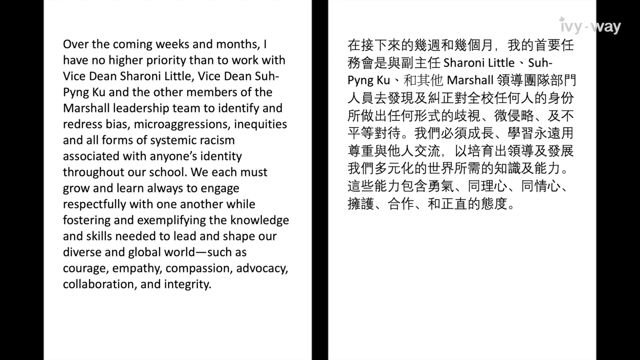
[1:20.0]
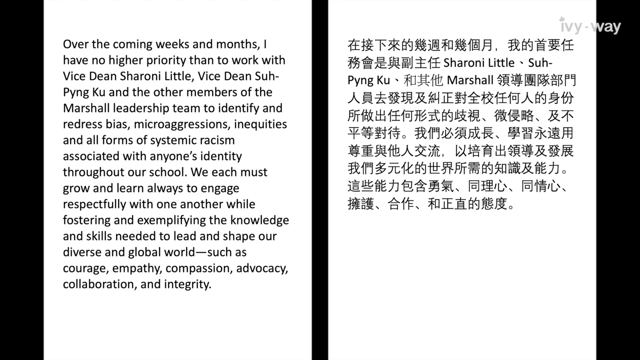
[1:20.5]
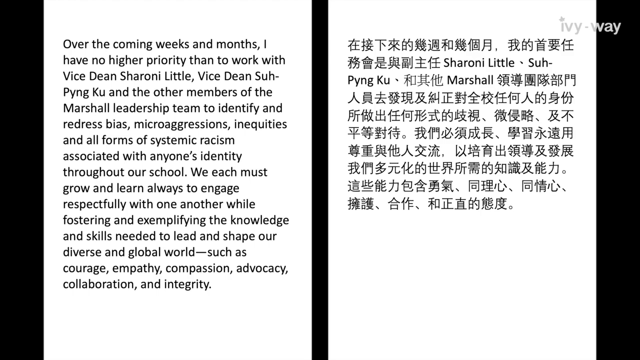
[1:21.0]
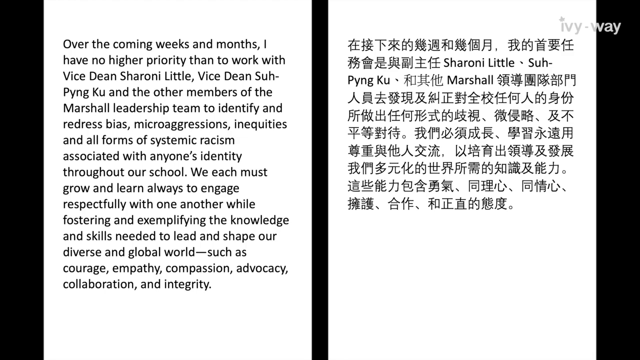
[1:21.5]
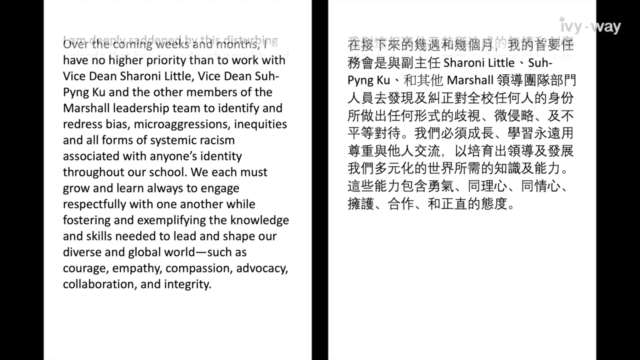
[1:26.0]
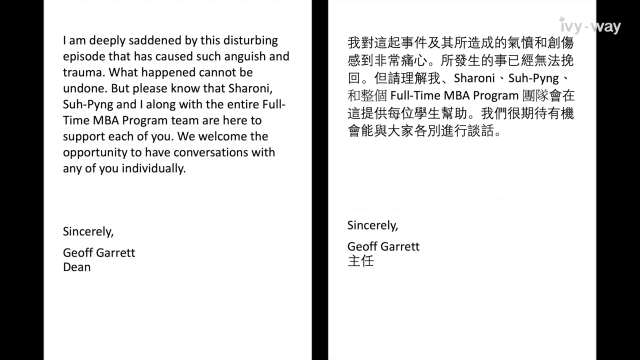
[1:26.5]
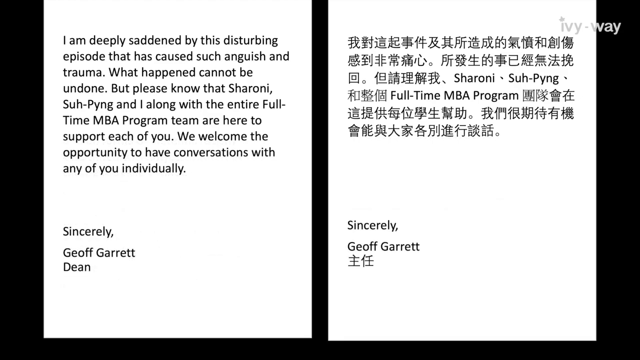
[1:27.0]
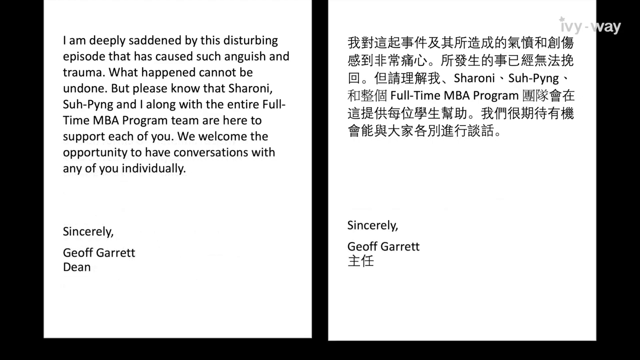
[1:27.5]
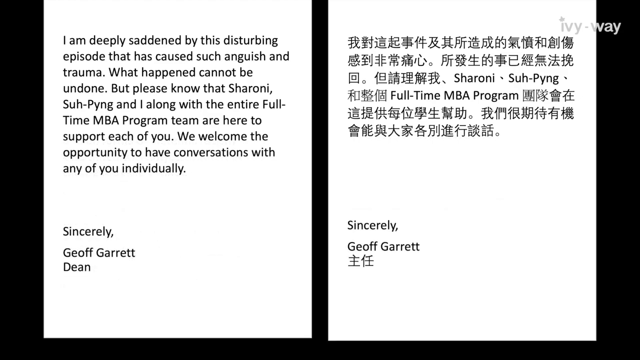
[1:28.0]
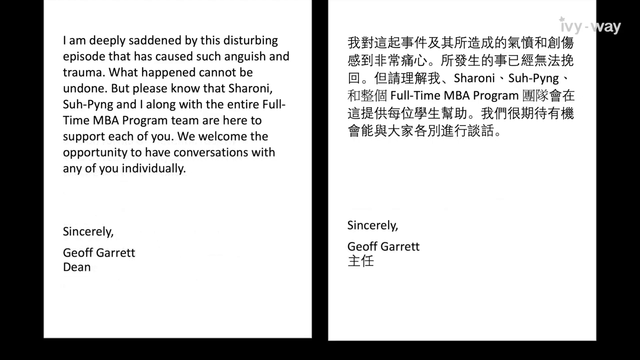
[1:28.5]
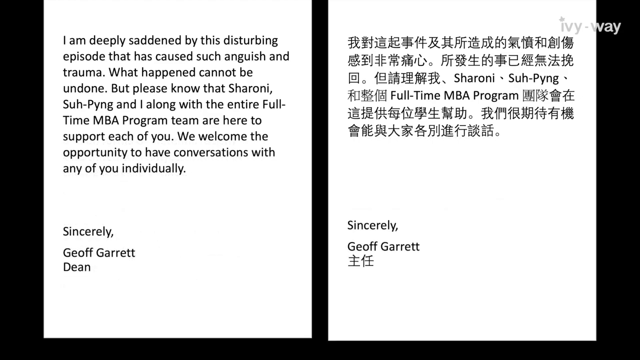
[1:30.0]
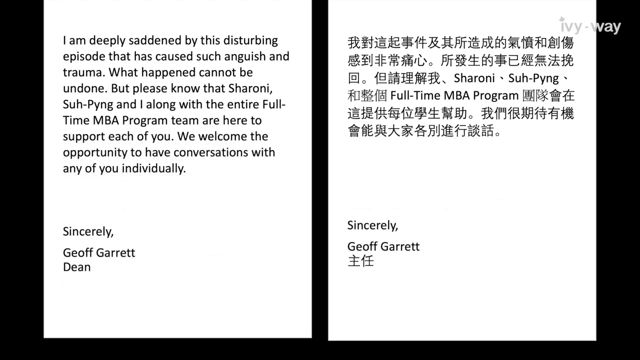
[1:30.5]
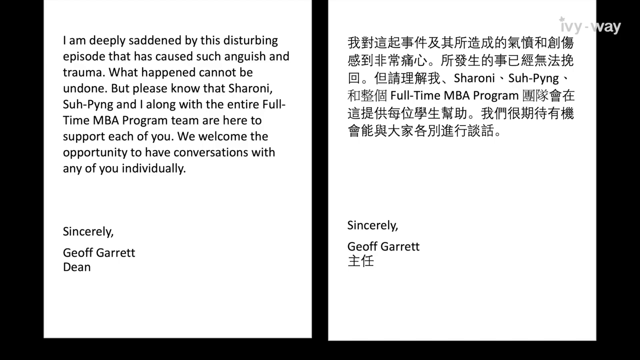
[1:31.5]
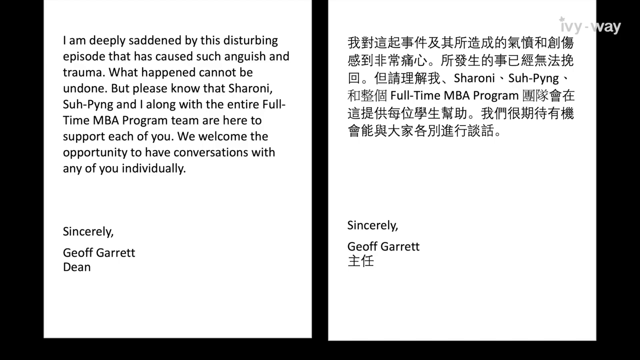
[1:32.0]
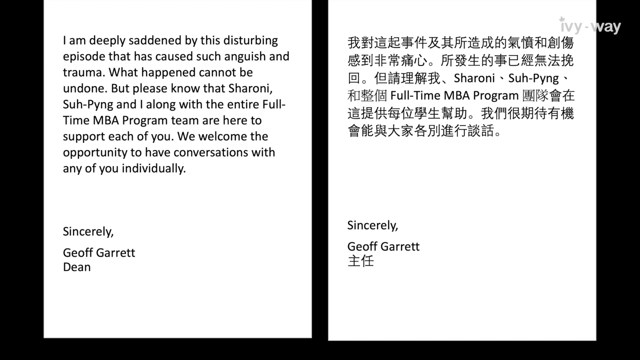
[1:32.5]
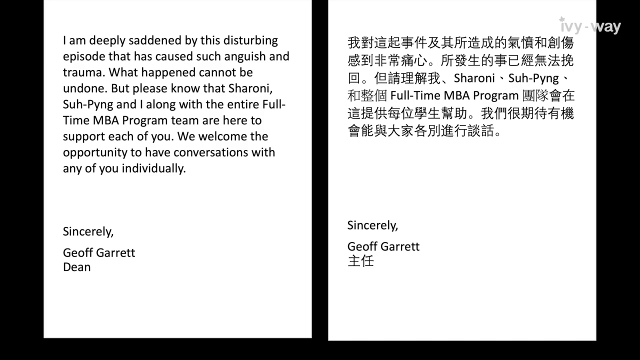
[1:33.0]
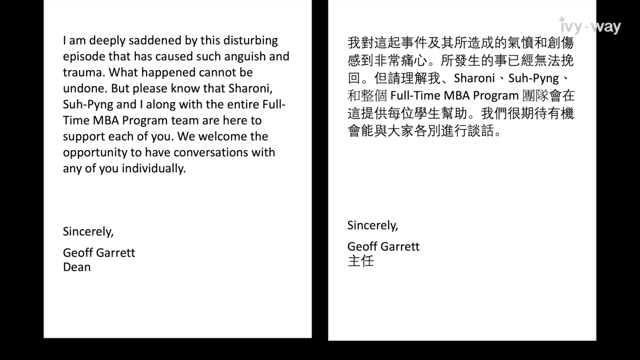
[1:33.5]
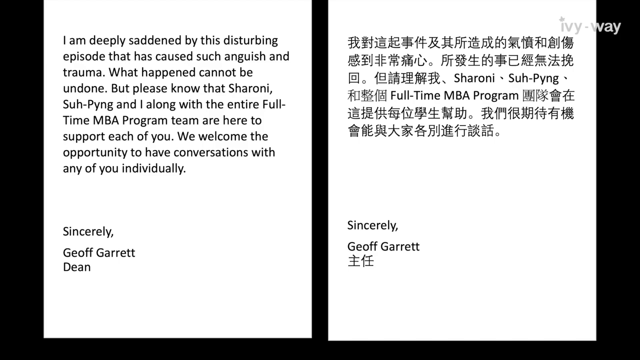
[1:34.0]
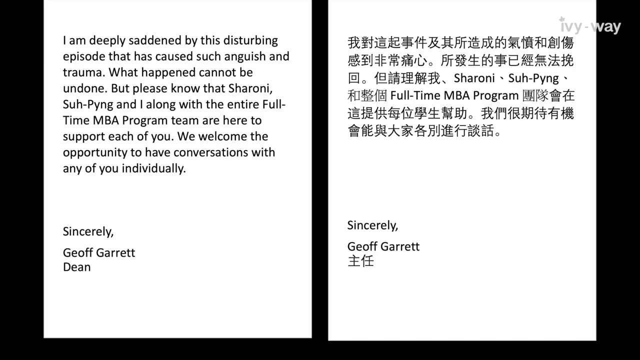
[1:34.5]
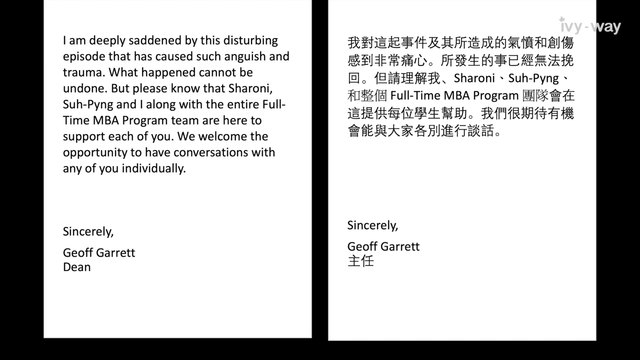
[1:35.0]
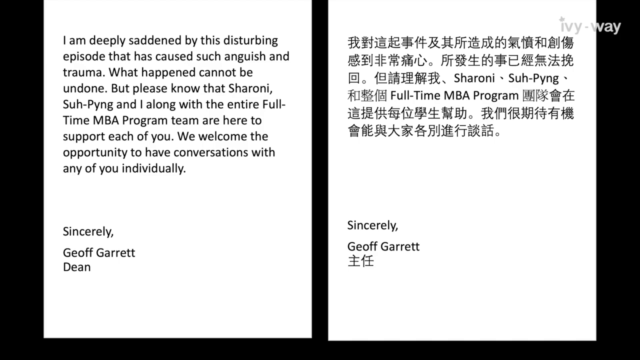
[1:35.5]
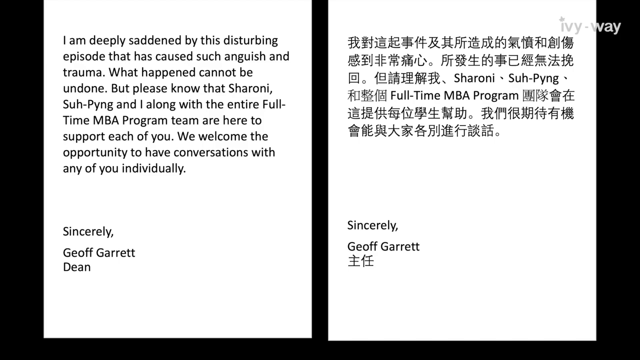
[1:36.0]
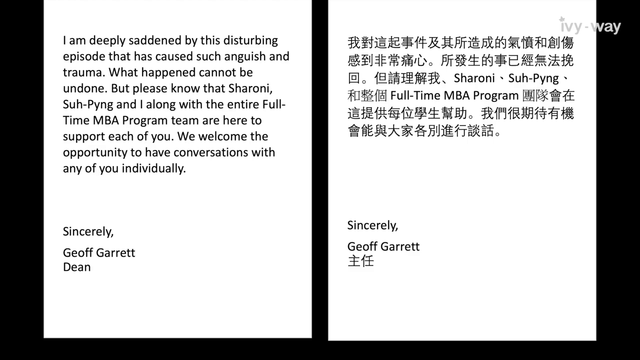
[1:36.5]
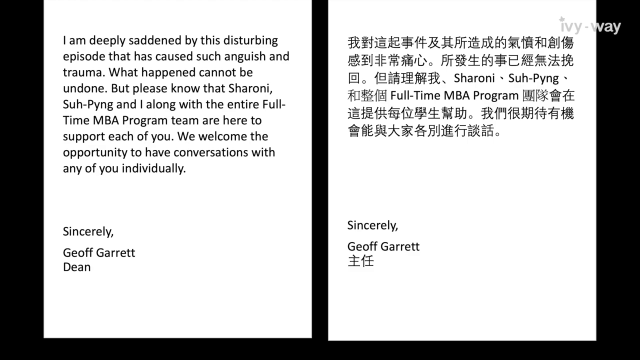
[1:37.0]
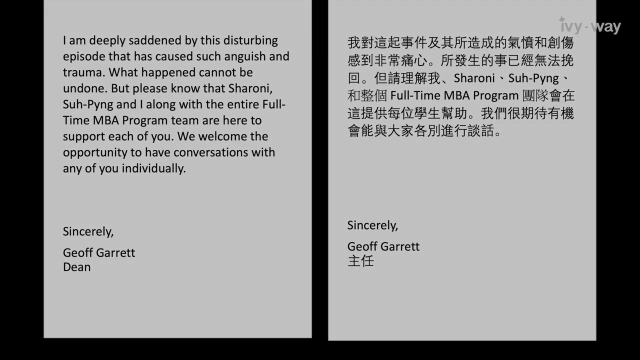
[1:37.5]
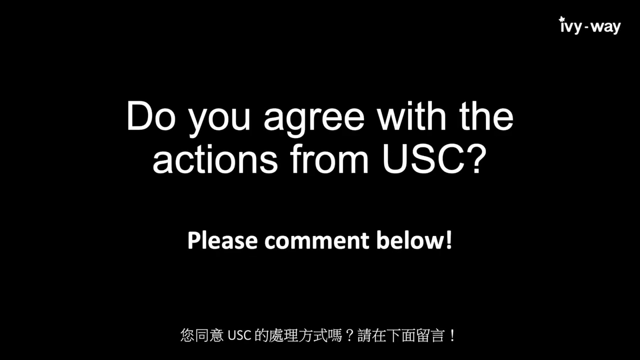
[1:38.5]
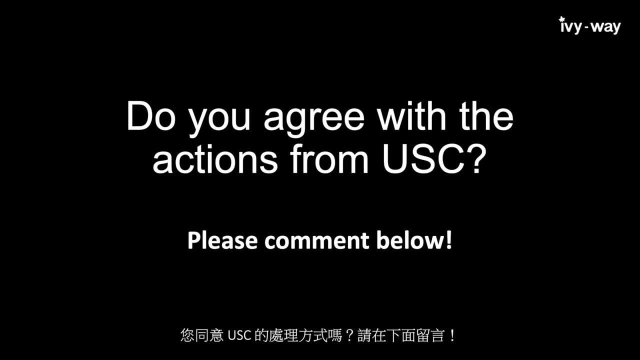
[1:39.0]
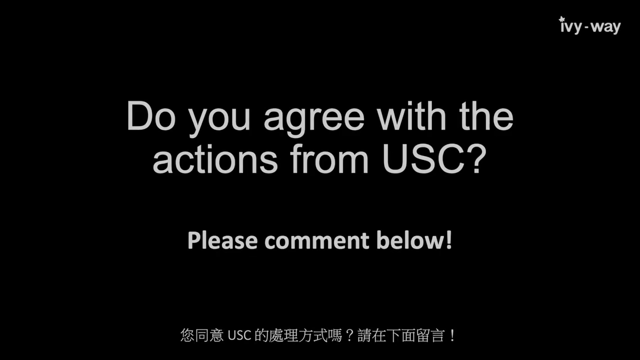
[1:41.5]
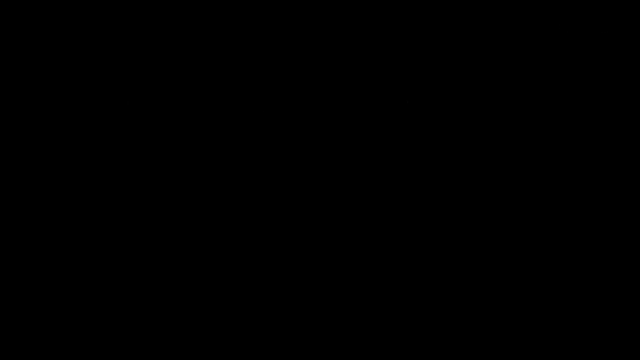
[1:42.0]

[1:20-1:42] A letter in black writing on white paper is on the screen, with the English version on the left-hand side and the same letter in Chinese on the right-hand side. The English reads: "over the coming weeks and months, I have no higher priority than to work with Vice Dean Sharonie Little, Vice Dean Su Quingcu, and the other members of the Marshall Leadership Team to identify and redress bias, microaggressions, inequities, and all forms of systemic racism associated with anyone's identity throughout our school. We each must grow and learn all ways to engage respectfully with one another, while fostering and exemplifying the knowledge and skills needed to lead and shape our diverse and global world, such as courage, empathy, compassion, advocacy, collaboration, and integrity." The screen then changes to the next page of the letter, where the English on the left says: "I'm deeply saddened by this disturbing episode that has caused such anguish and trauma. What happened cannot be undone. But please know that Sharonie, Su Quingcu, and I, along with the entire full-time MBA program team, are here to support each of you. We welcome the opportunity to have conversations with any of you individually. Sincerely, Jeff Garrett Dean."